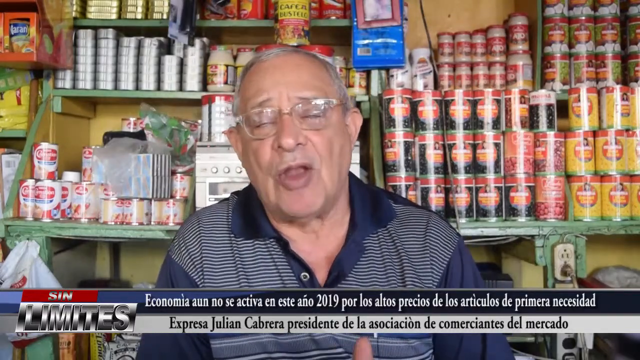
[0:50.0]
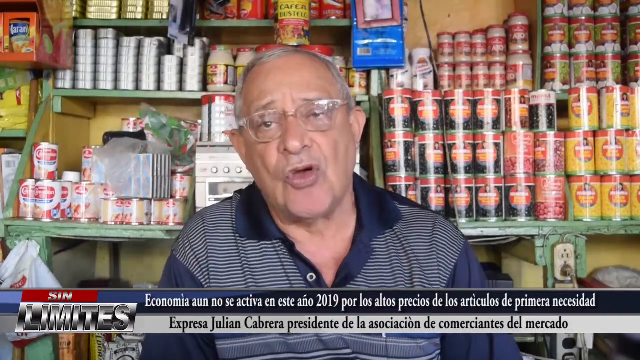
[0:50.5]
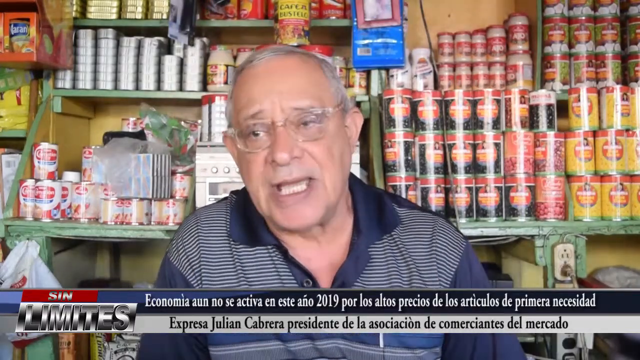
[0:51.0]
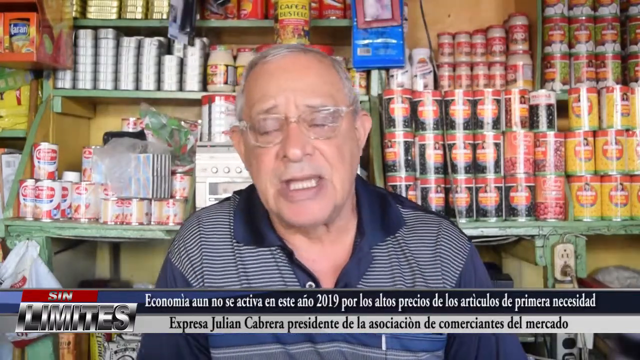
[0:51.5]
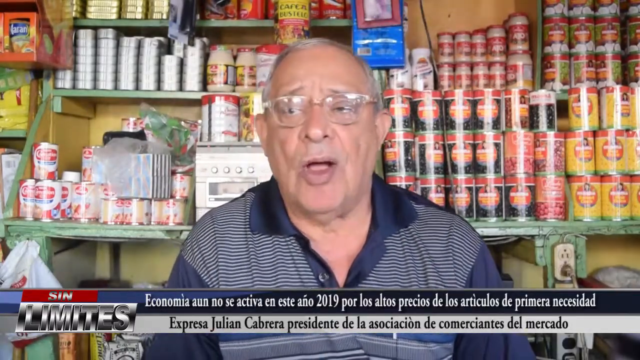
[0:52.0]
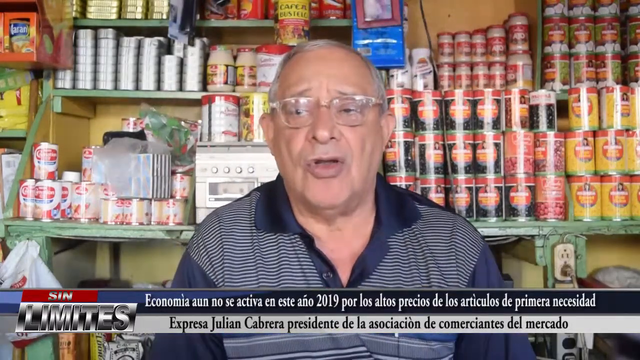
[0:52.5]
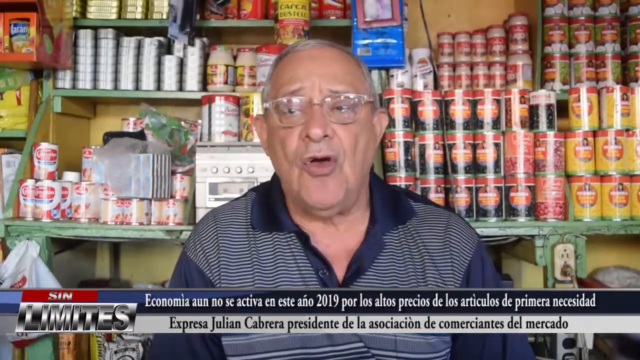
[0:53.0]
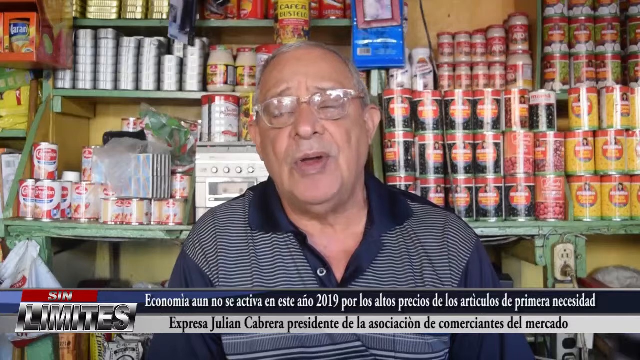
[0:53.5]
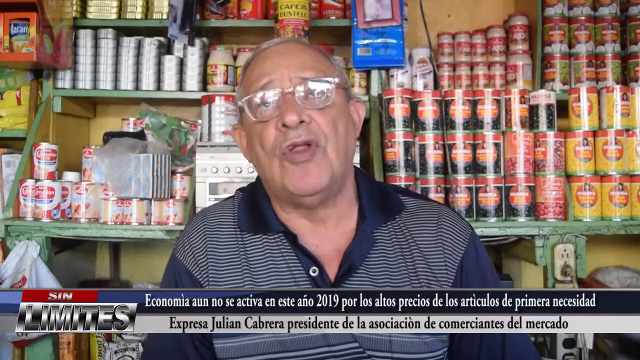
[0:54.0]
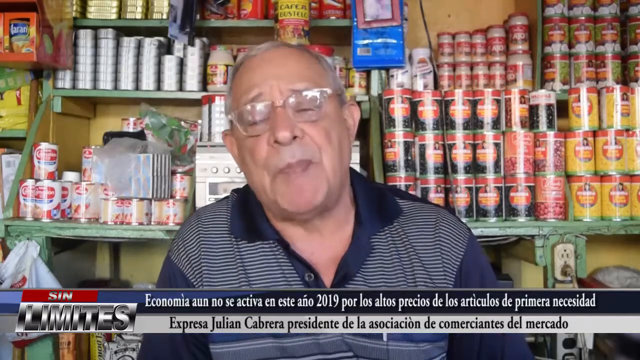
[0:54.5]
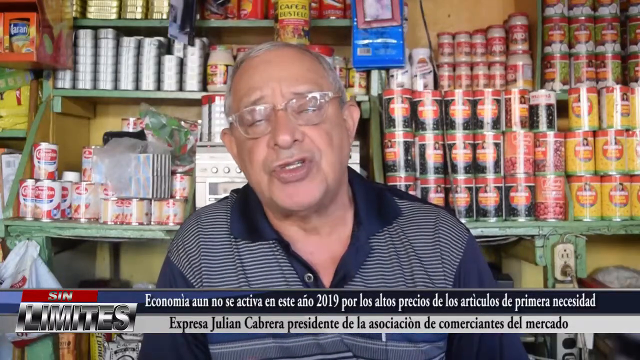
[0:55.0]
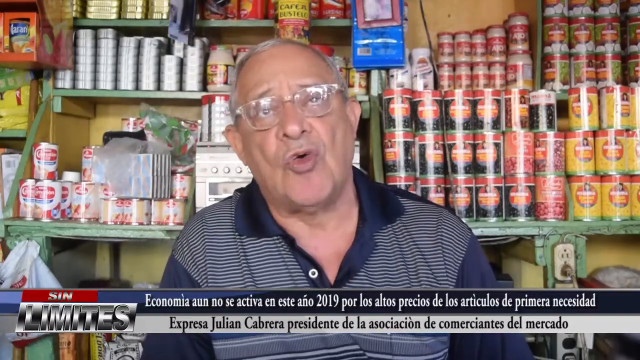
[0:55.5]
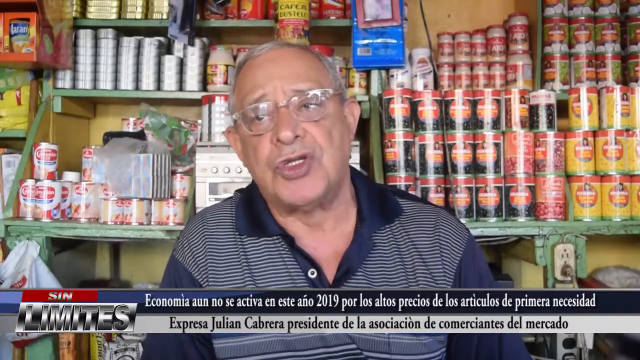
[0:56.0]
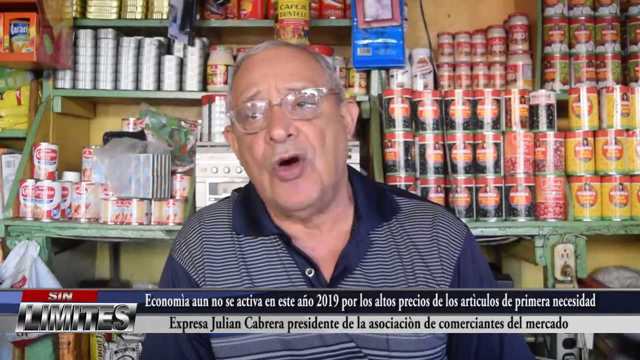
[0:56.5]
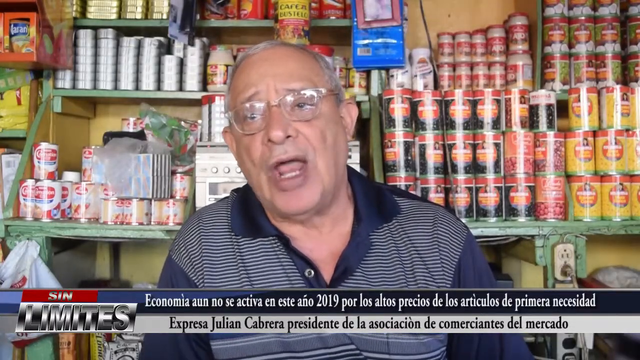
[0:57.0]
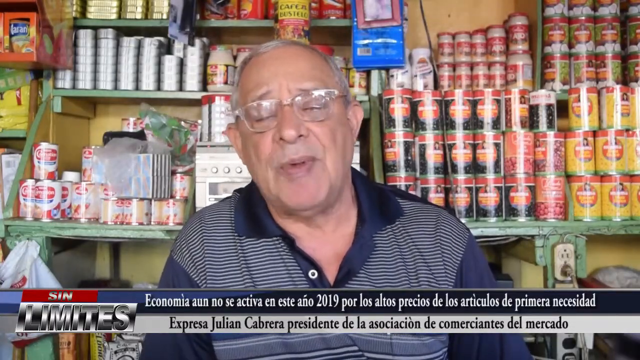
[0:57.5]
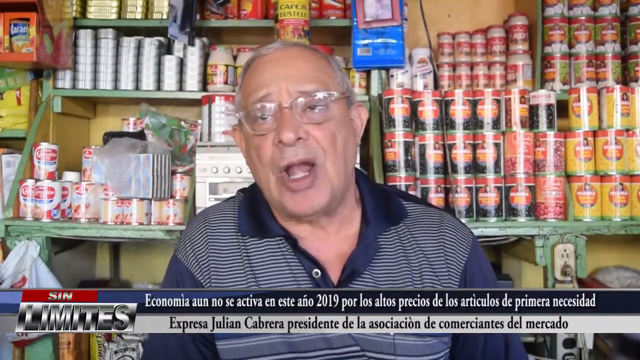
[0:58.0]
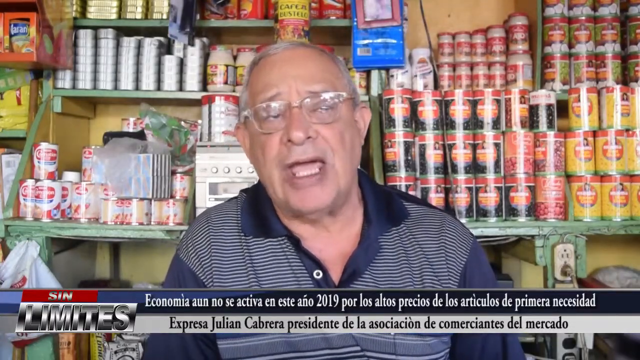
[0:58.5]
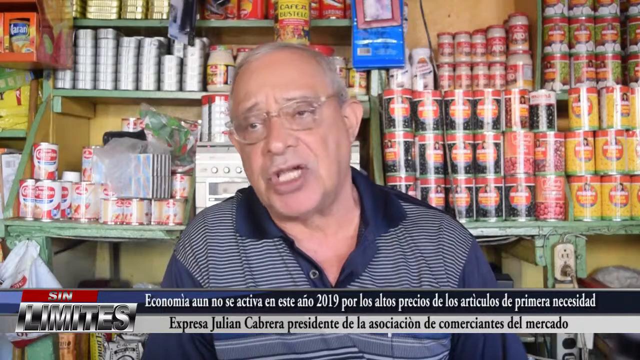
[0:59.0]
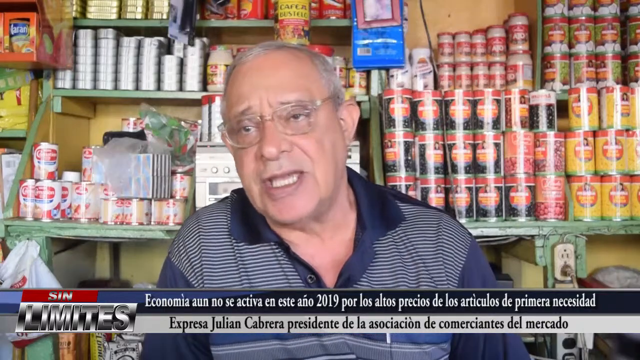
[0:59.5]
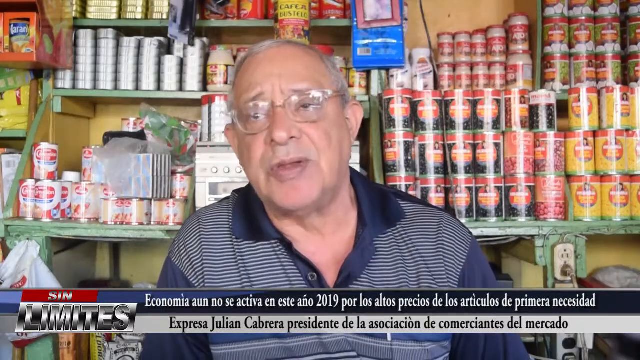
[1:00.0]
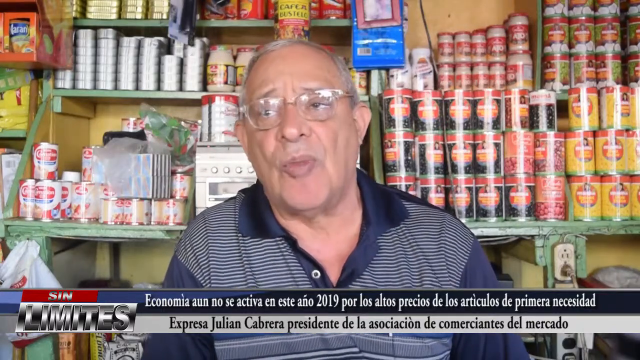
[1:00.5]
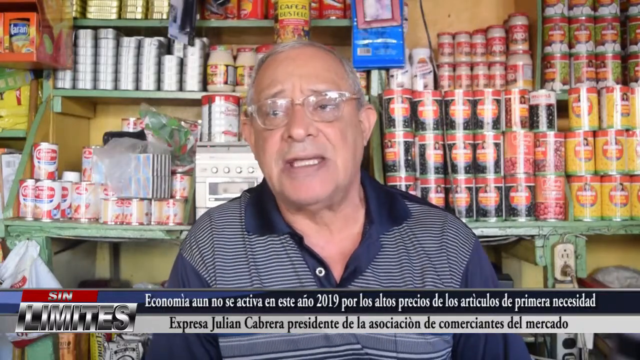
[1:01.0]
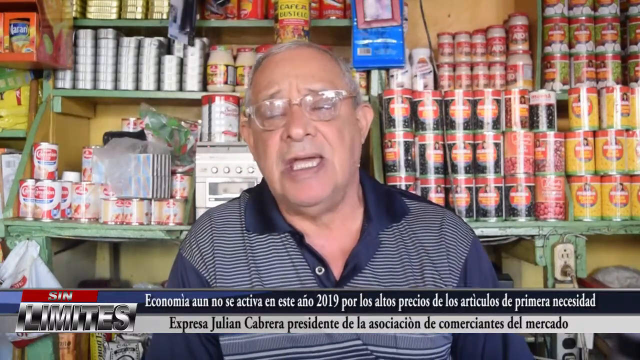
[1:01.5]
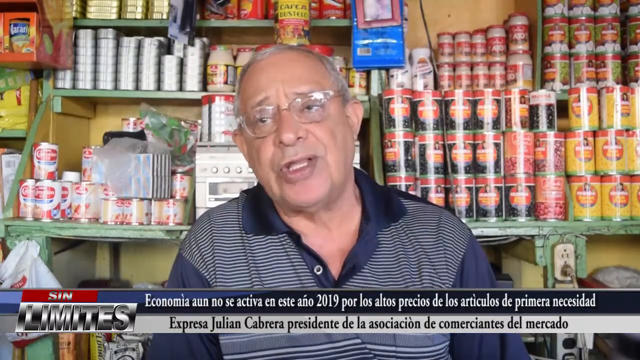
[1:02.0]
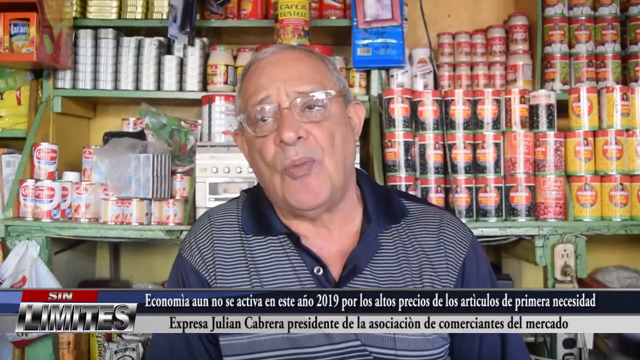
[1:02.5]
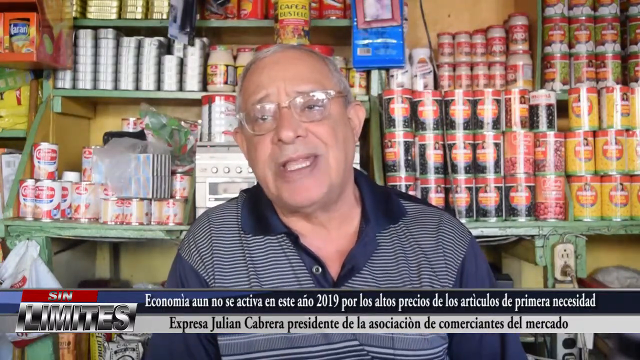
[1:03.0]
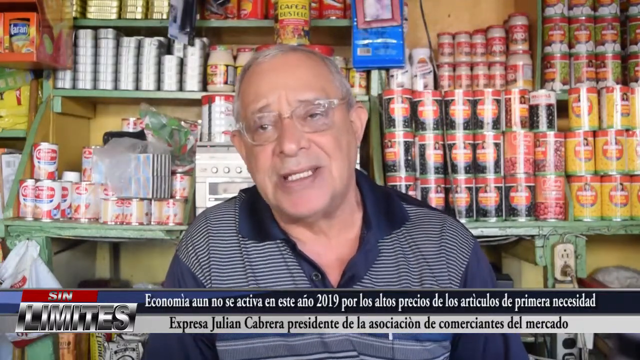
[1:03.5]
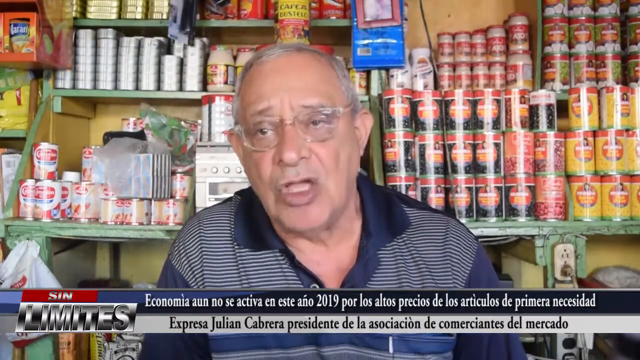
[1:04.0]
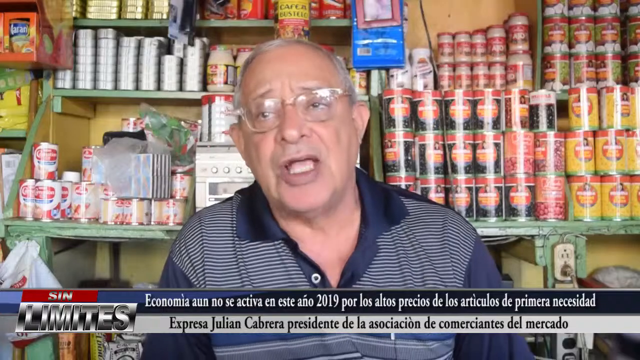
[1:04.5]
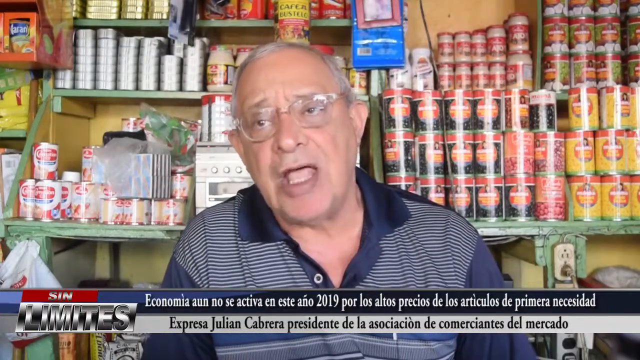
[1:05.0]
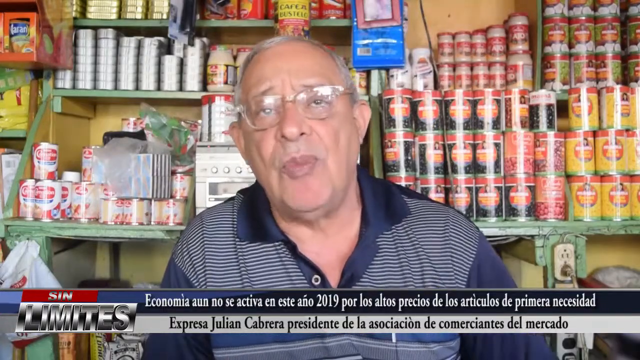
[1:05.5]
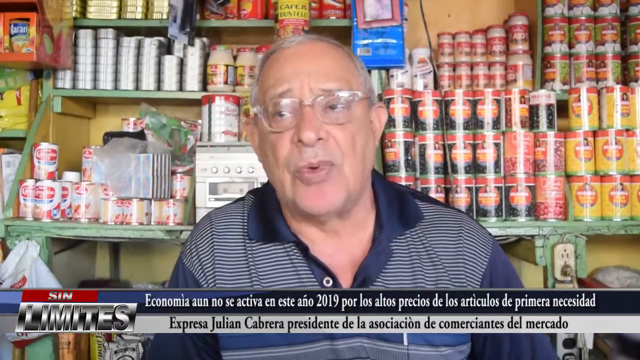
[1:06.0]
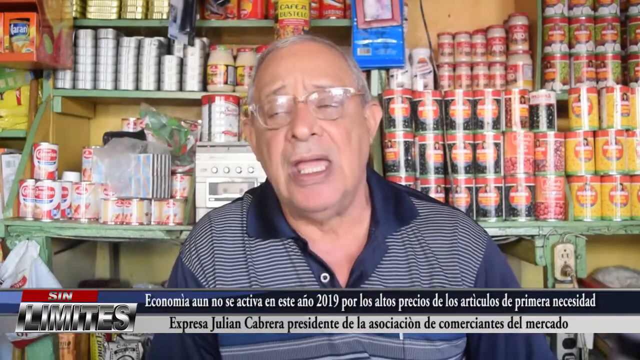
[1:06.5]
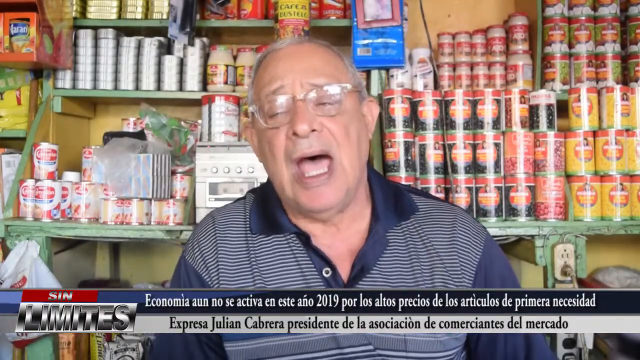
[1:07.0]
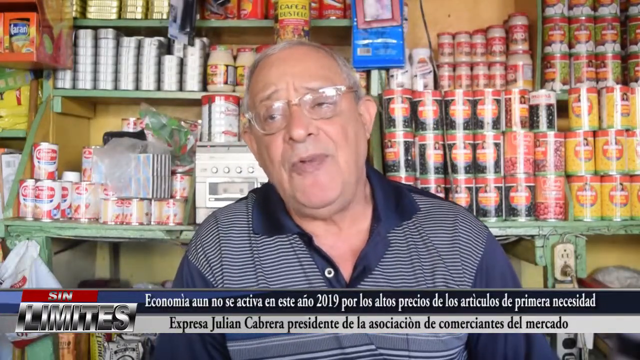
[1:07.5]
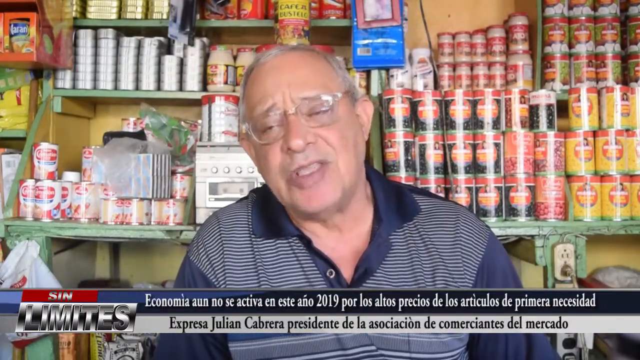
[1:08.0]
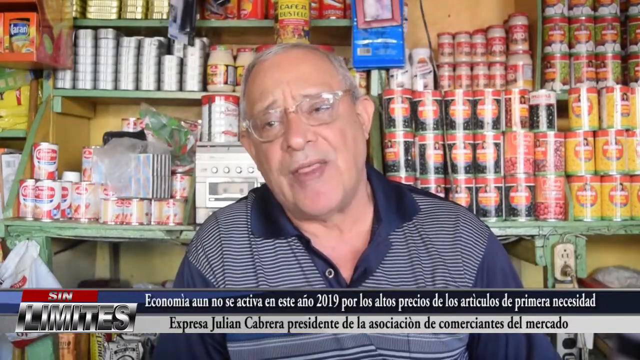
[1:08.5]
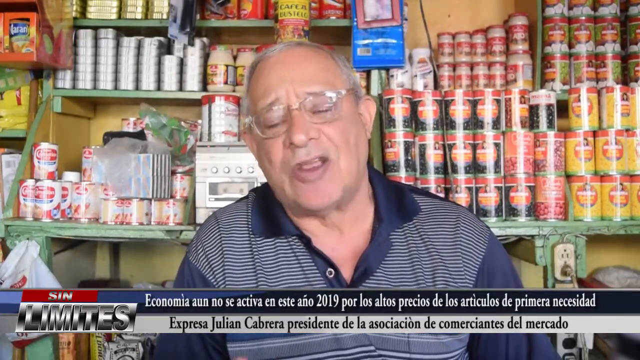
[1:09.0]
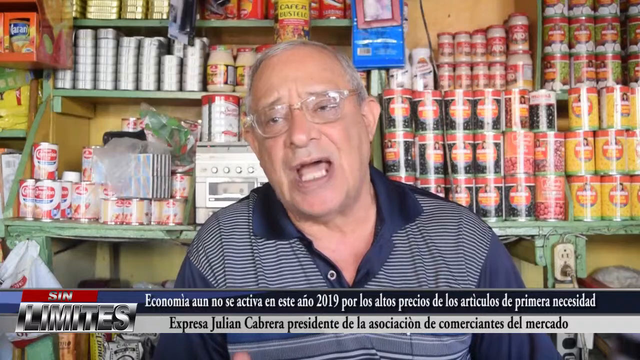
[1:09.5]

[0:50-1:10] A man is interviewed in a store with shelves, with captions at the bottom mentioning 2019 and economics in a language that might be Spanish. The captions include "express Julian Presidente" and "de la Asociación de Comerciantes del Mercado". To his right are some outlets with something plugged in. The man is Caucasian, probably in his 60s or 70s, with gray hair, and wears a blue and gray striped shirt with a navy collar and sleeves.